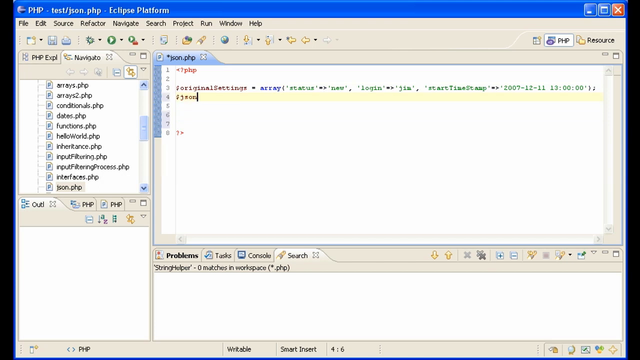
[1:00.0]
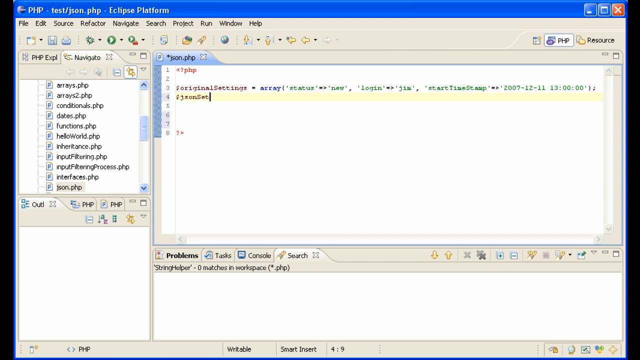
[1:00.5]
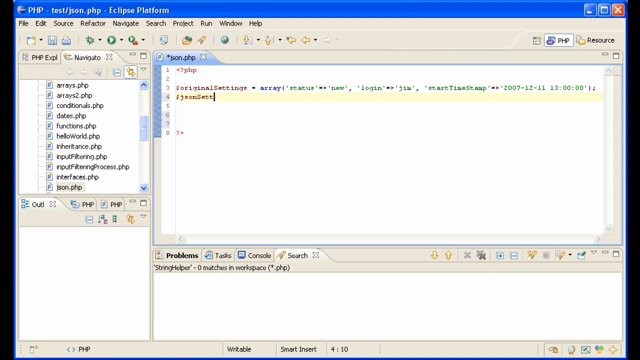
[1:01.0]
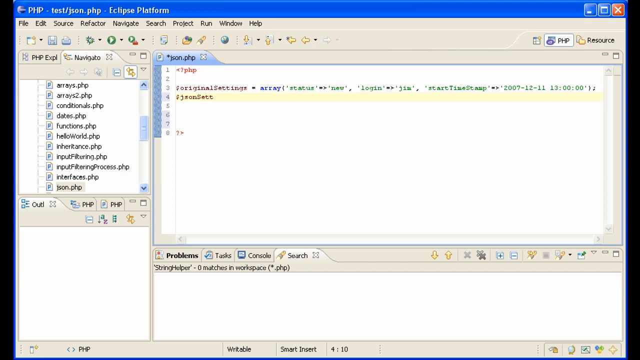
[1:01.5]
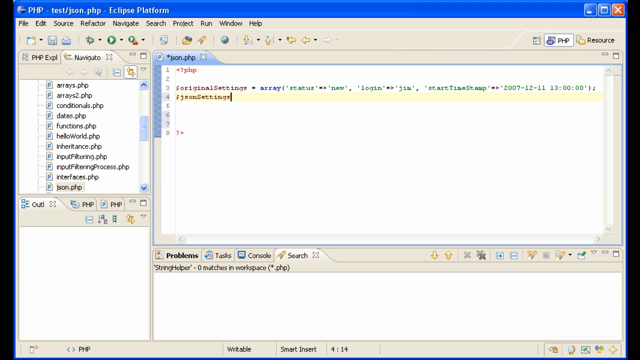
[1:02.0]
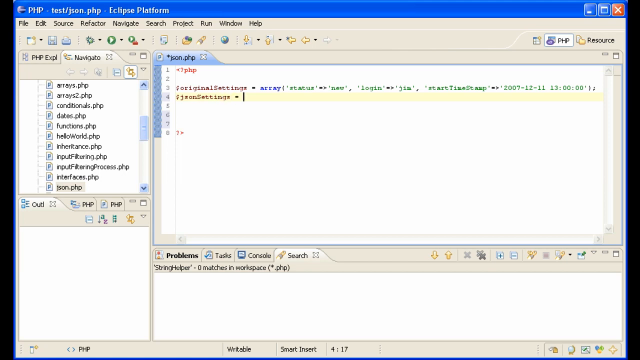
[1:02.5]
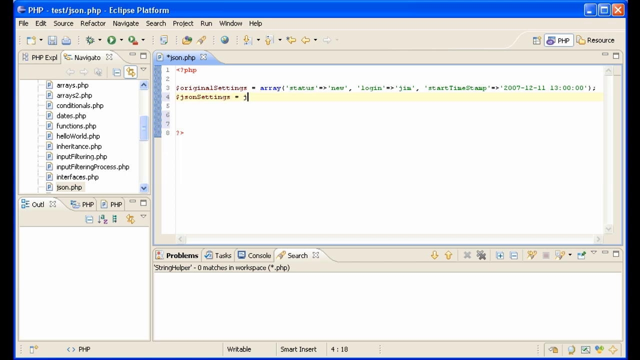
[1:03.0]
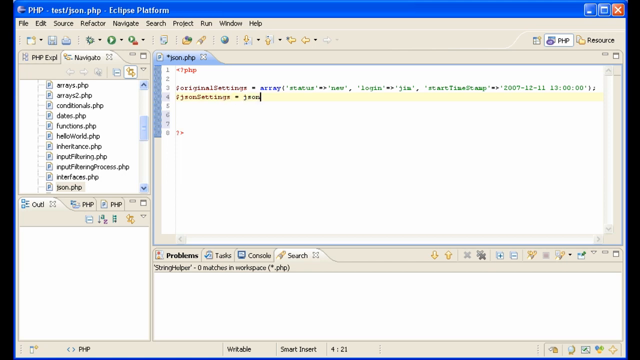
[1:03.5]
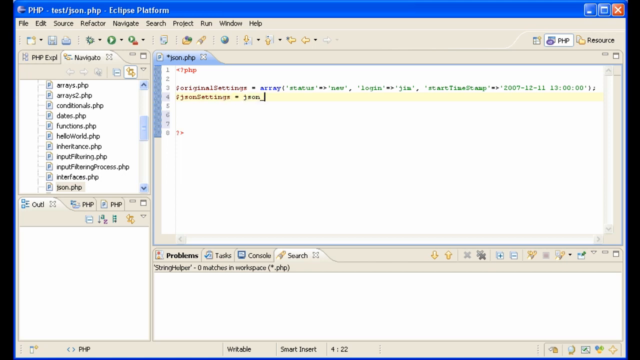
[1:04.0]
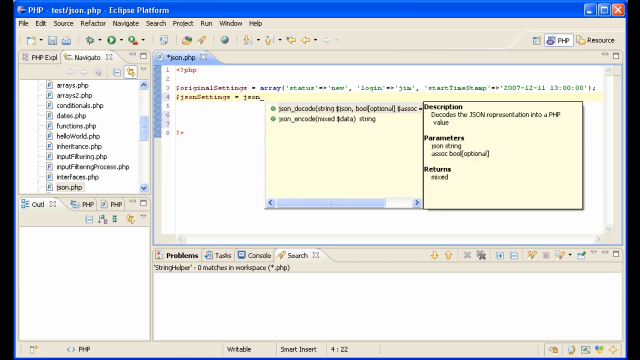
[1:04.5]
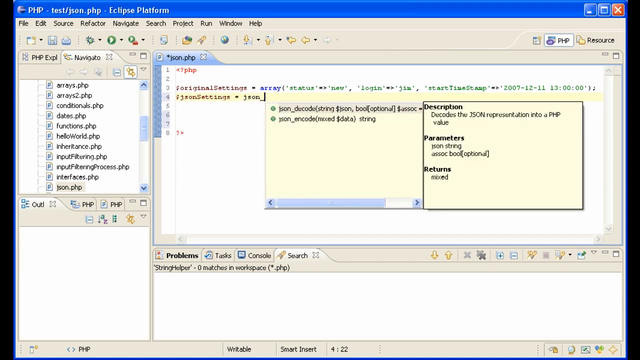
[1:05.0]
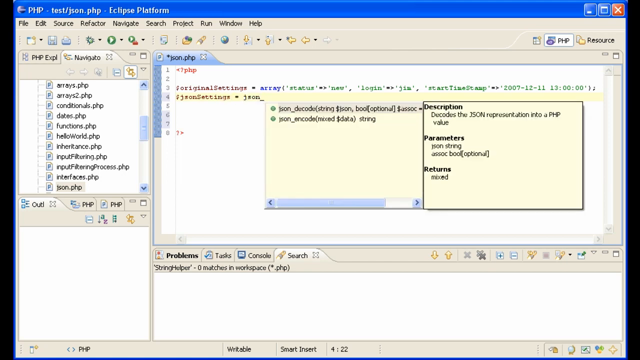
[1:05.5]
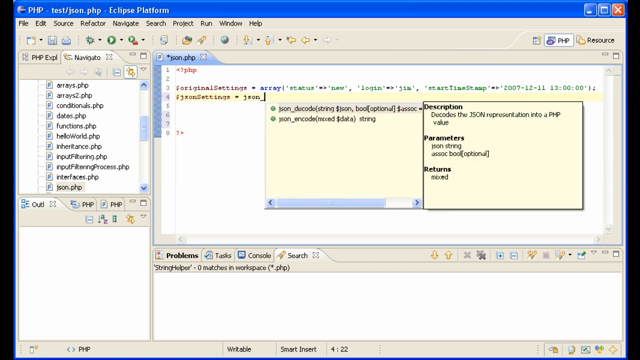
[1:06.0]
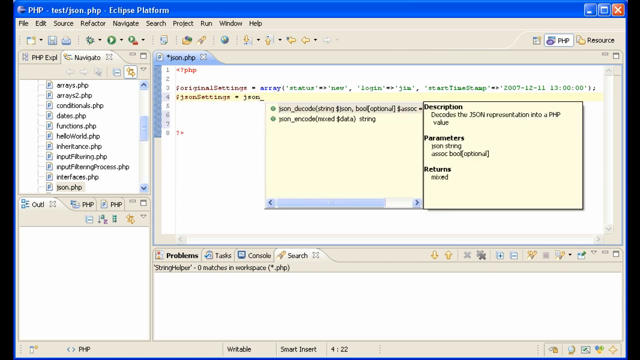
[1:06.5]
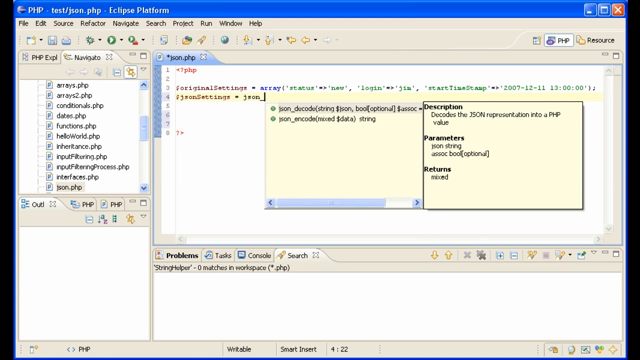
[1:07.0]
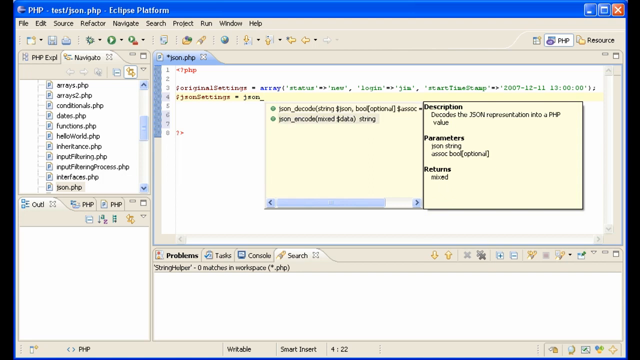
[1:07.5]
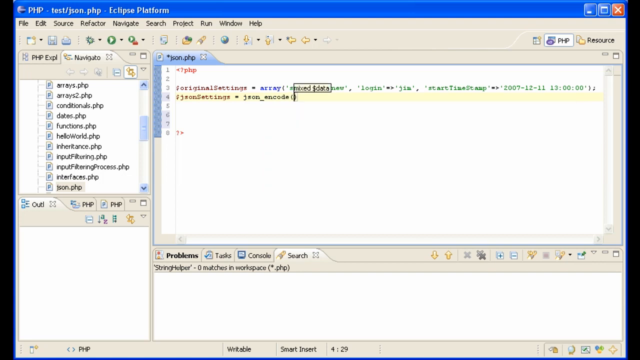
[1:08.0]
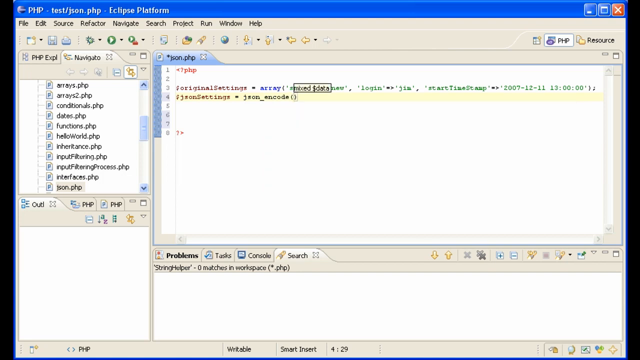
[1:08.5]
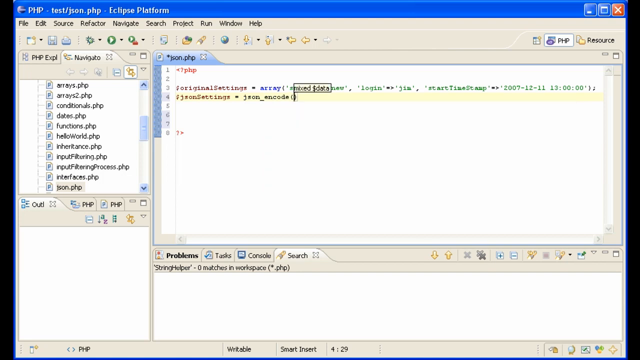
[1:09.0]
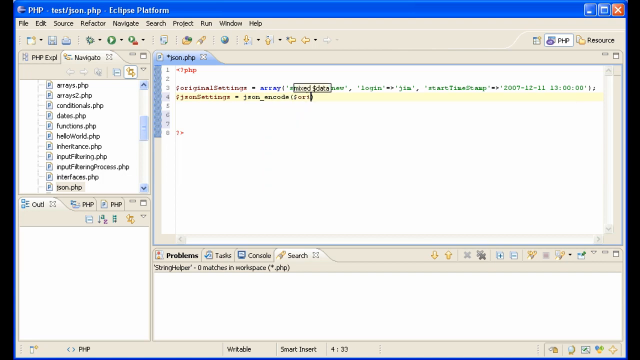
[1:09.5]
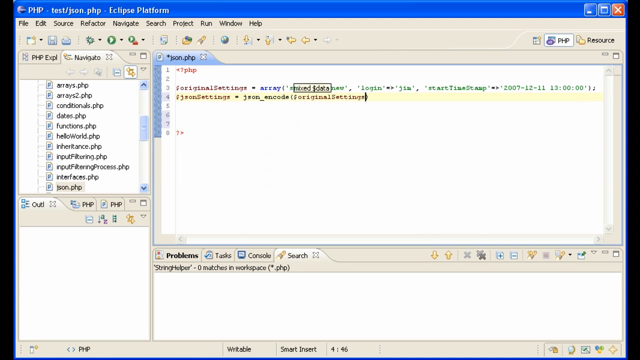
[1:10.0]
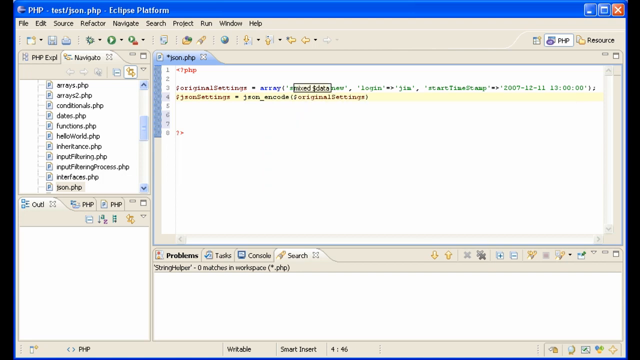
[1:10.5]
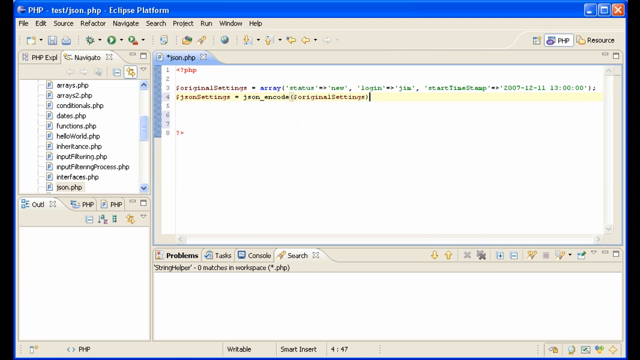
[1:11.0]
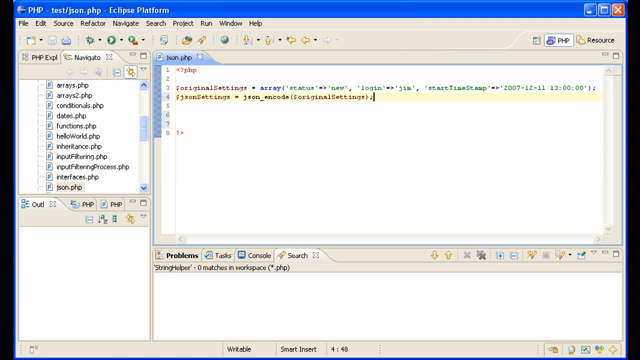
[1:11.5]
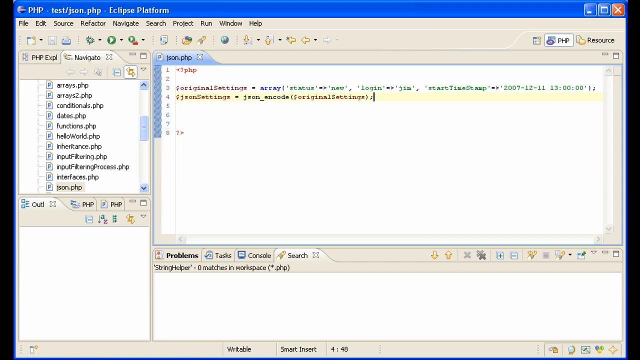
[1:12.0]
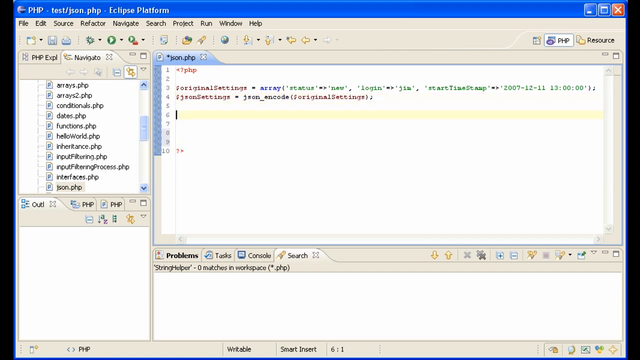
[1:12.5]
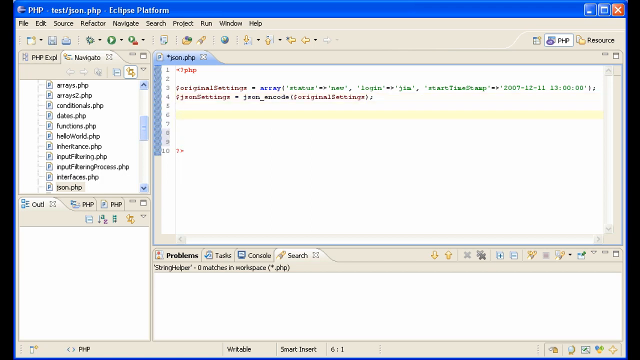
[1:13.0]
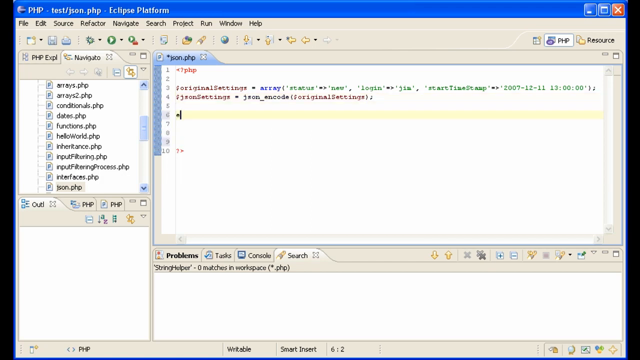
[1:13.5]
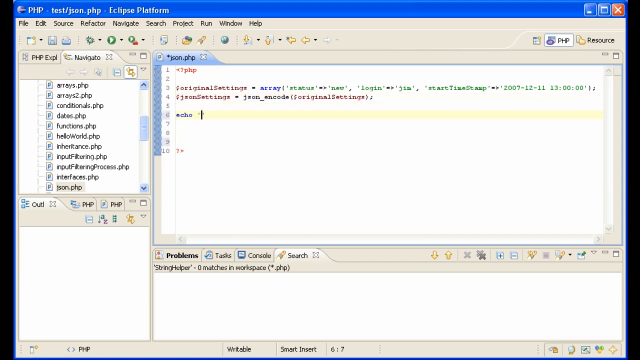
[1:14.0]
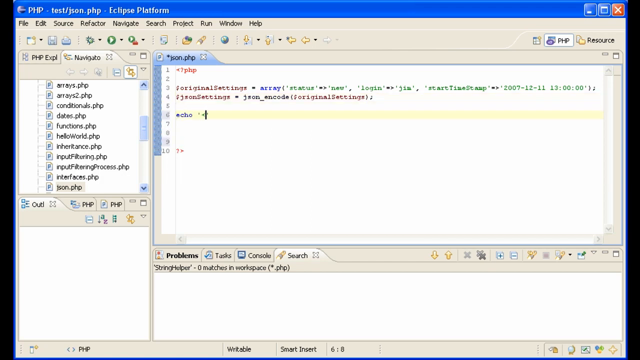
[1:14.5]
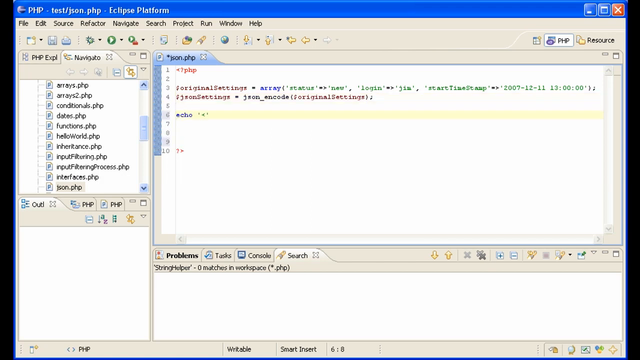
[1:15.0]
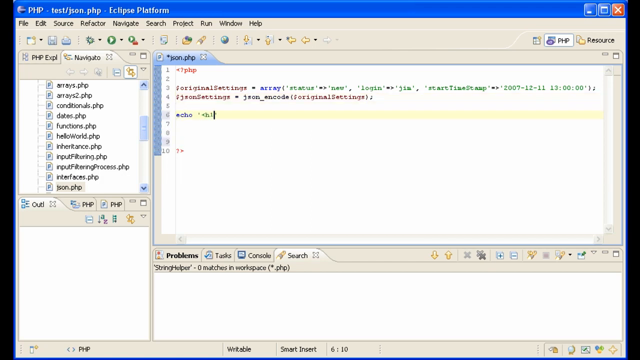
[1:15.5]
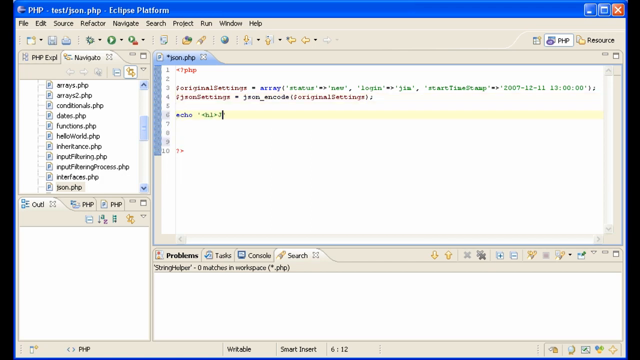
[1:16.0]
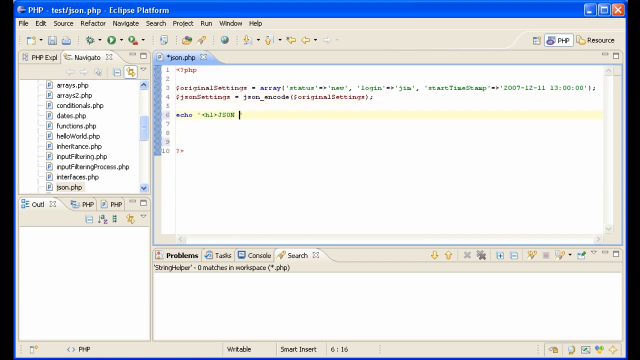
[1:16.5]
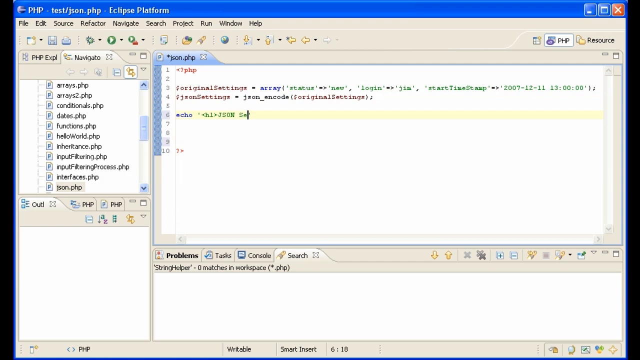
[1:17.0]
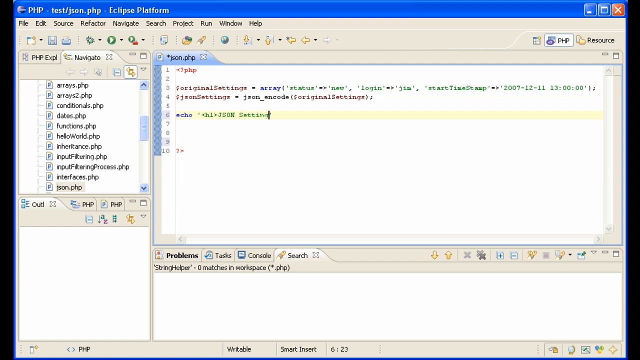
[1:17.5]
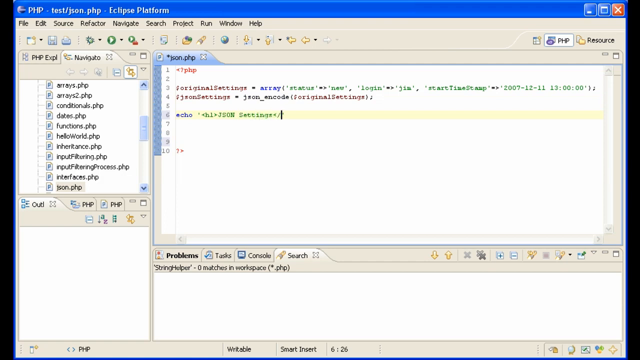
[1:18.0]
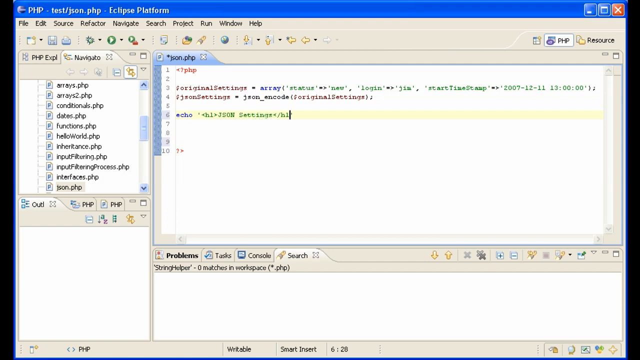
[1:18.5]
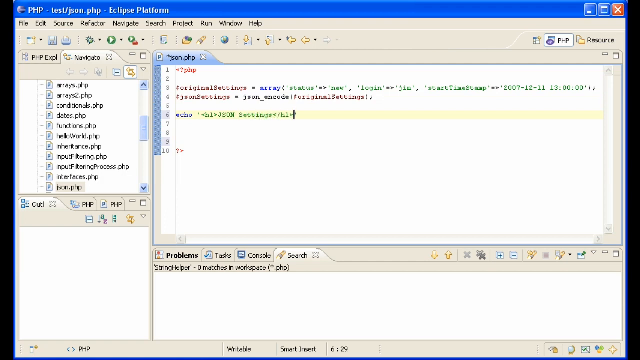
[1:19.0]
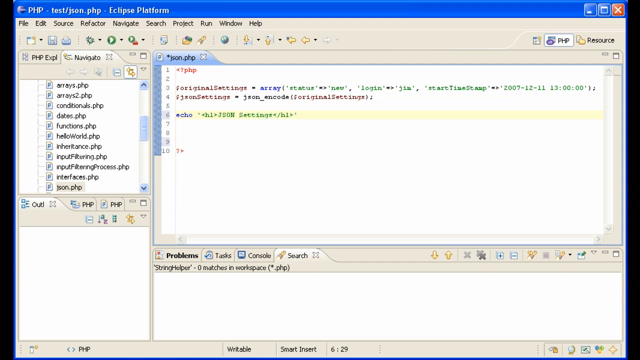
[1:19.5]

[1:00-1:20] More text is typed onto the fourth line, starting with what looks like a semicolon, then the word json, then the word Settings, followed by a dash and json again. An underscore is typed, which brings up a couple of small pop-up windows with information such as description, parameters, and returns; they stay on screen for a couple of moments. The word encode is added, followed by originalSettings and a semicolon. The cursor moves down to the sixth line, which becomes highlighted, and the word echo is typed, followed by what looks like either hl or h1 (it is hard to read), then JSON, Settings, and the h1 or hl again, and finally a semicolon on that sixth line.